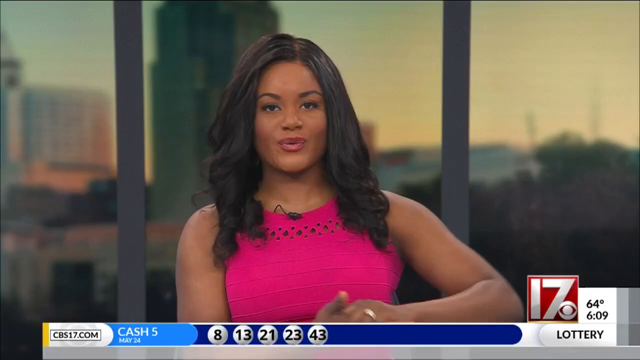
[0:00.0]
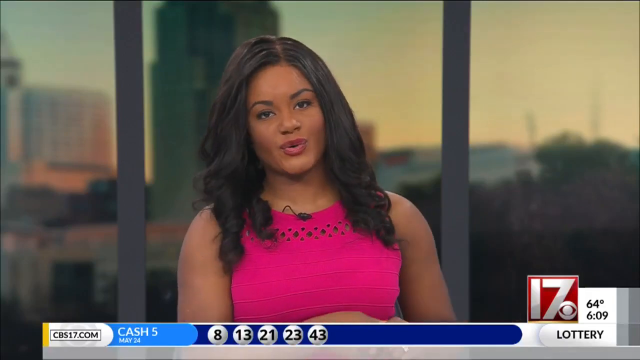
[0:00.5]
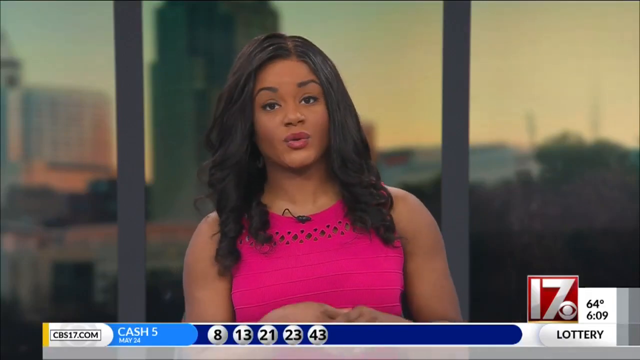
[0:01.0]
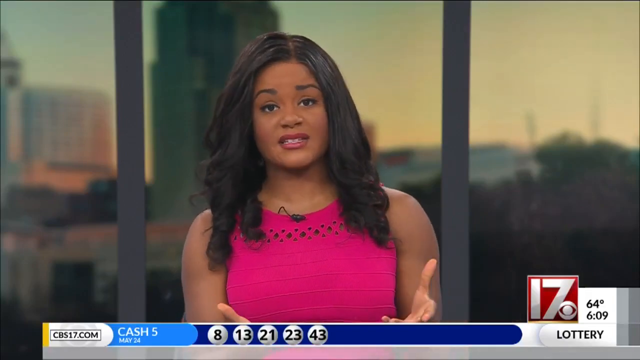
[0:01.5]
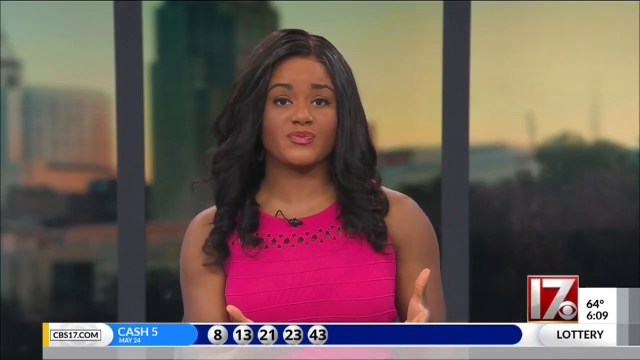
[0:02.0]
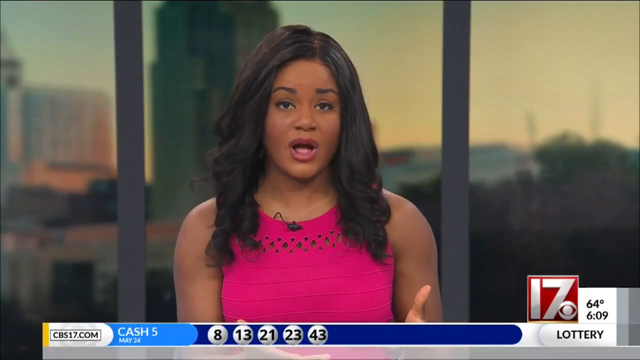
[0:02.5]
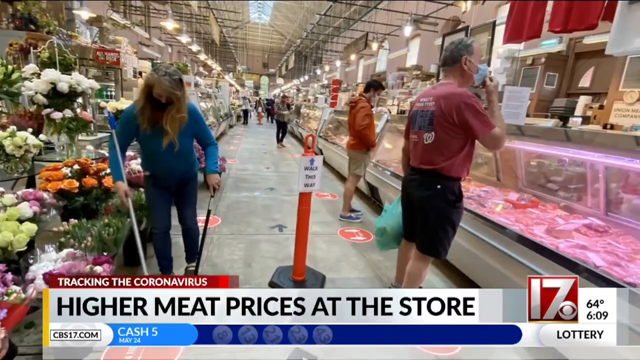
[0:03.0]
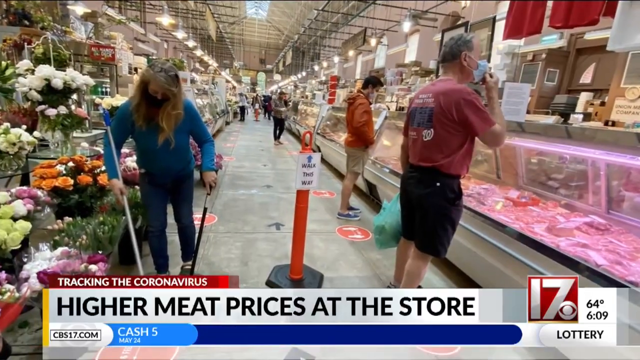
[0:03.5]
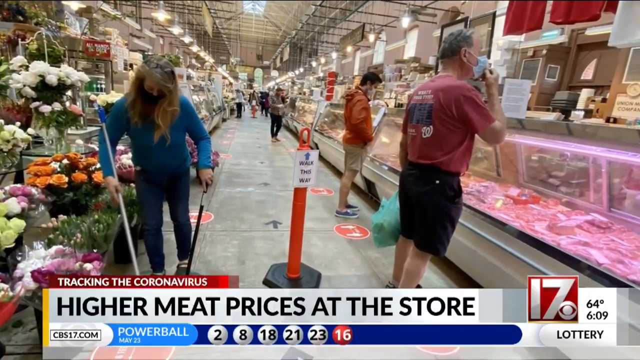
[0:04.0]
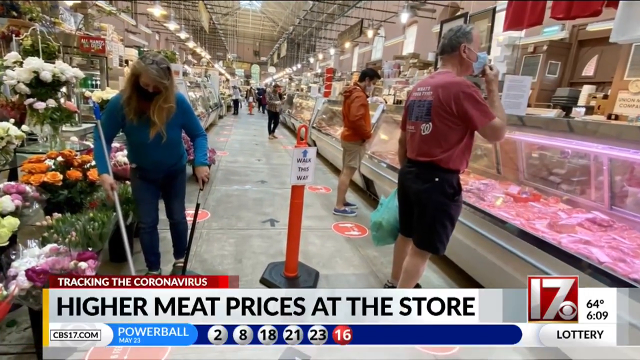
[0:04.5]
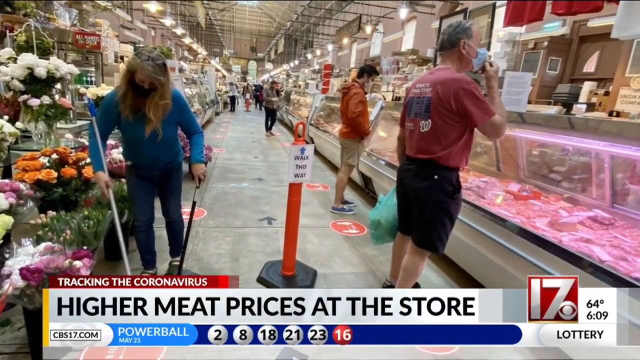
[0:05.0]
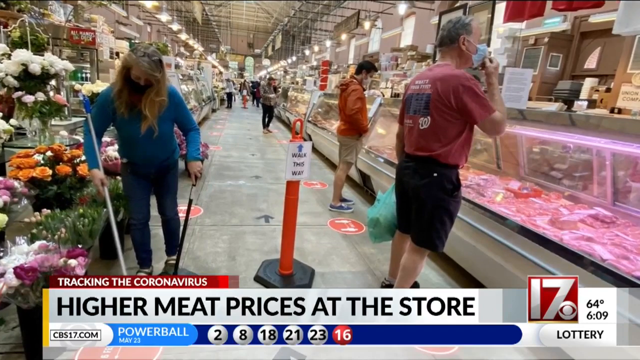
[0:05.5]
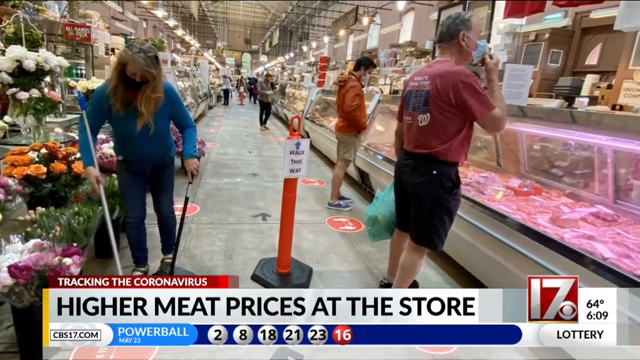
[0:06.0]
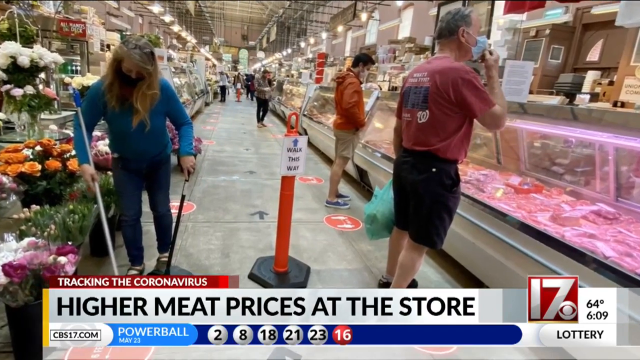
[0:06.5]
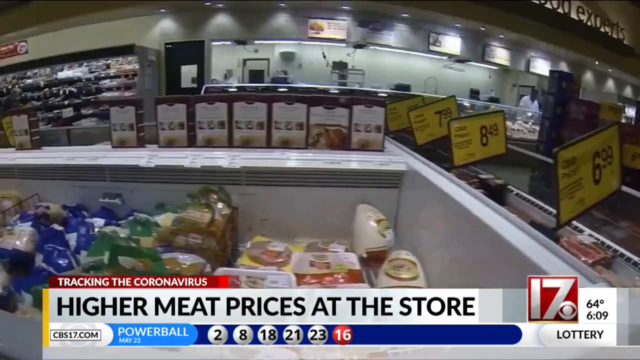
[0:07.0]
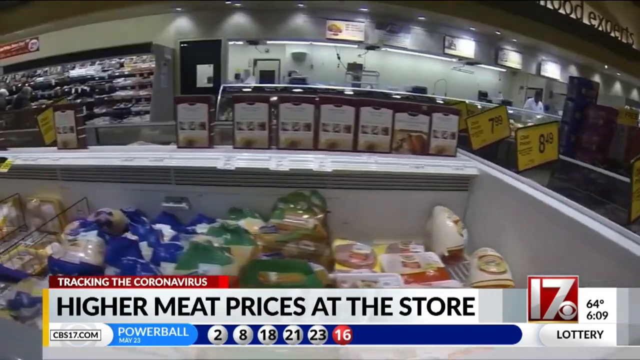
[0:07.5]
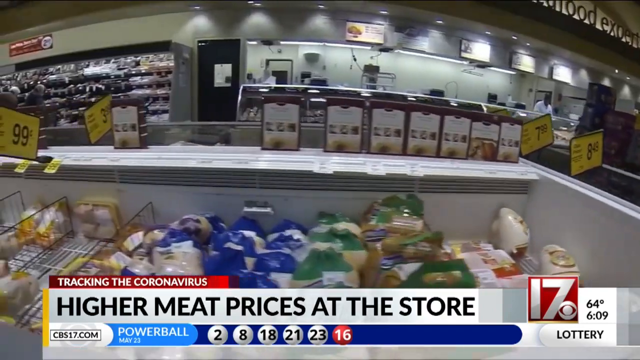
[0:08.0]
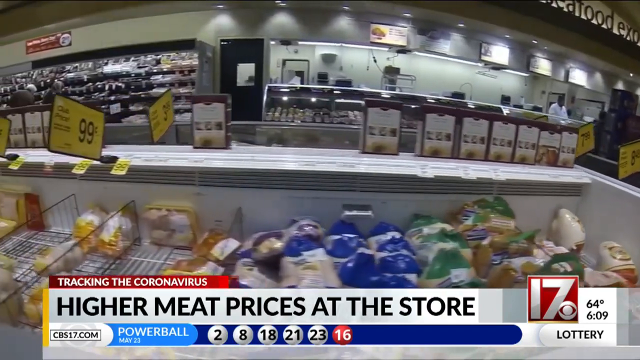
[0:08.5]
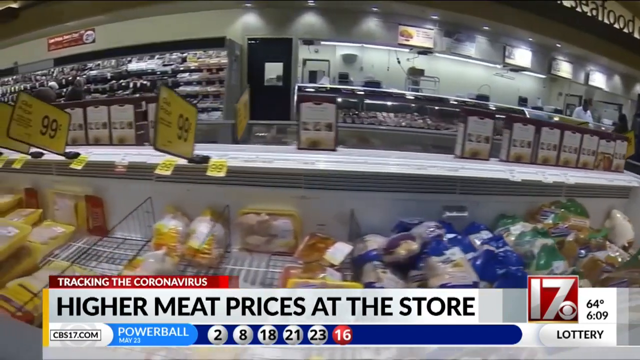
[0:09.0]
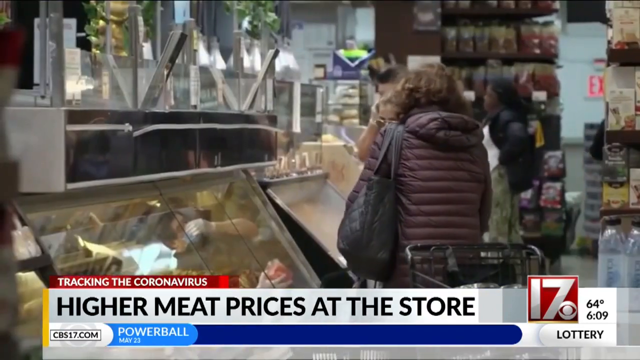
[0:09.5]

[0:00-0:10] A supermarket appears, with people standing, or rather doing their shopping. A message on the screen says "higher meat prices at the store." Everyone looks like they are just standing there being surprised, apparently because they can see the higher meat prices as they try to do their shopping. A black TV presenter appears; she wears a pink dress and has long, slightly wavy hair, and she is talking. The video then moves to the supermarket, where three people are standing: an old man who seems to be around 70 to 80 years old, another man standing behind him, and a lady who is also standing there, looking around. They don't seem to be doing much; they are just standing there.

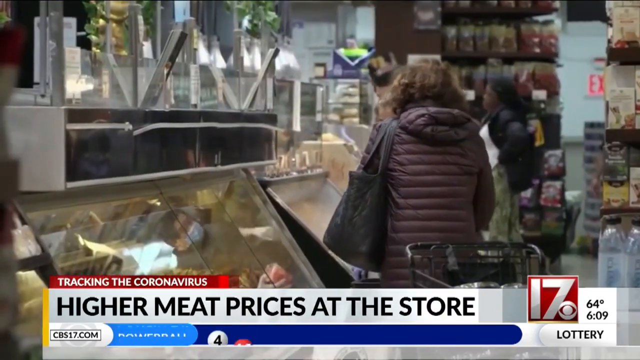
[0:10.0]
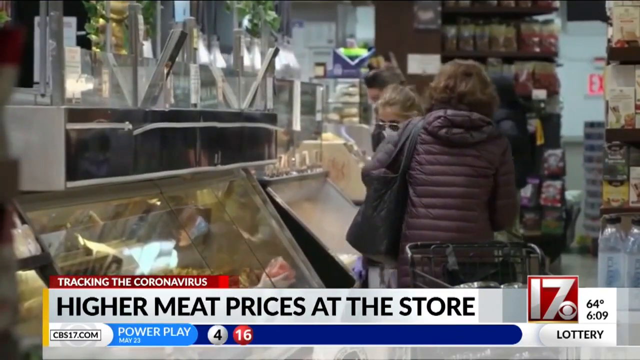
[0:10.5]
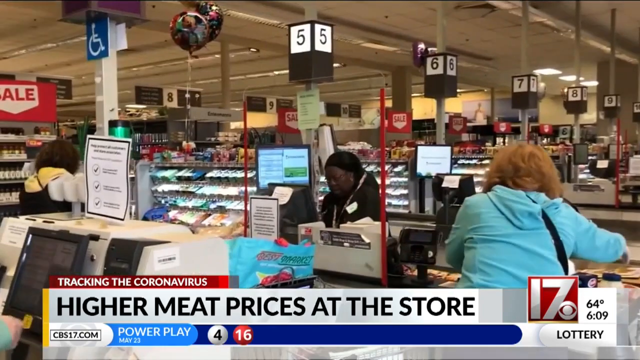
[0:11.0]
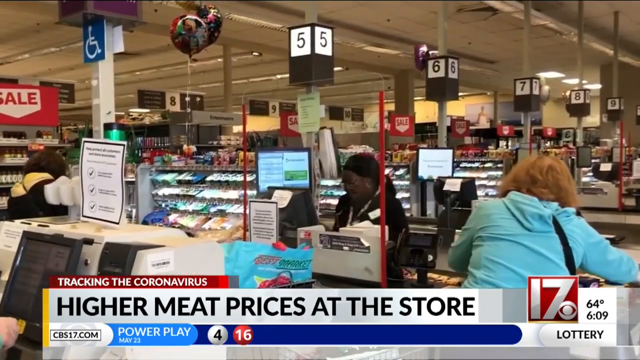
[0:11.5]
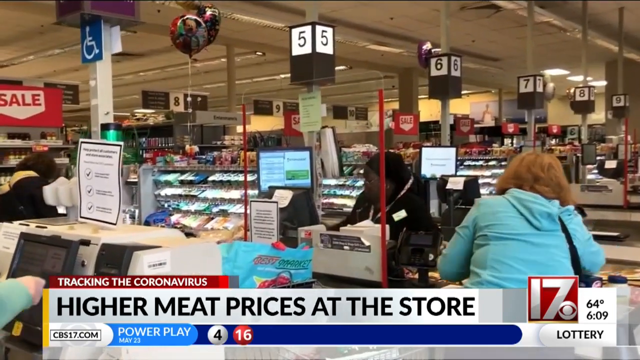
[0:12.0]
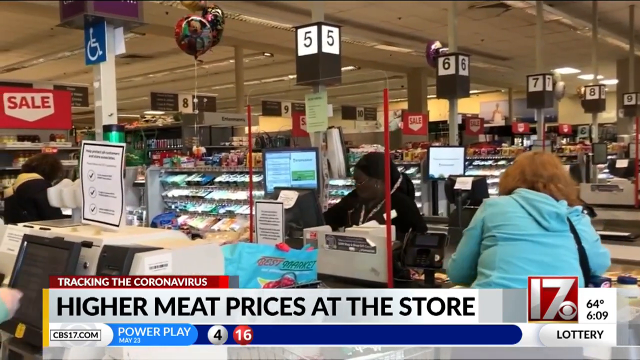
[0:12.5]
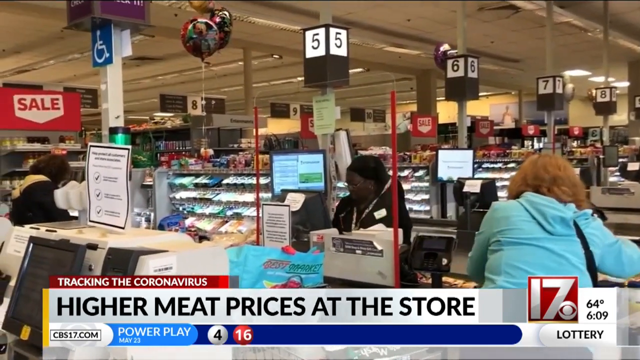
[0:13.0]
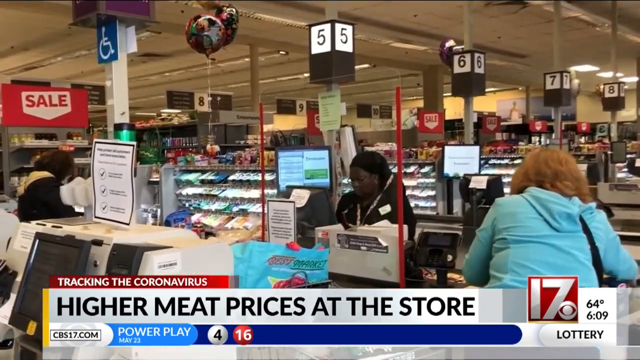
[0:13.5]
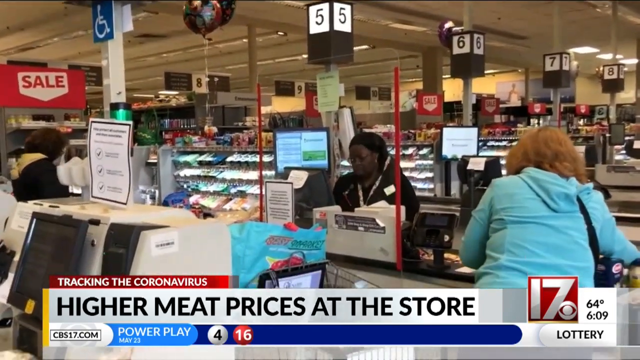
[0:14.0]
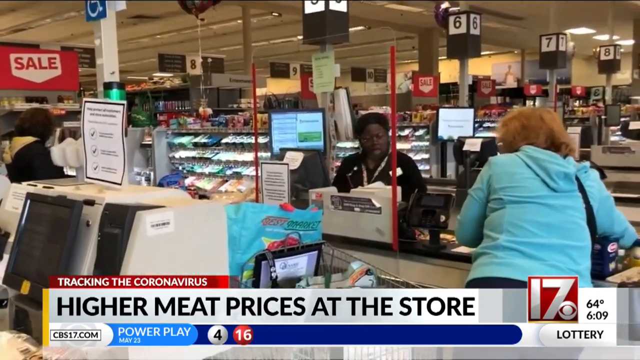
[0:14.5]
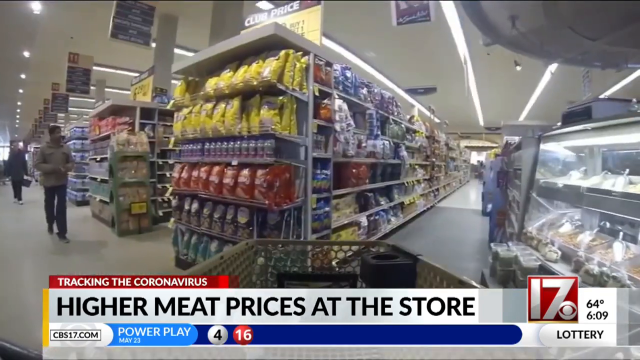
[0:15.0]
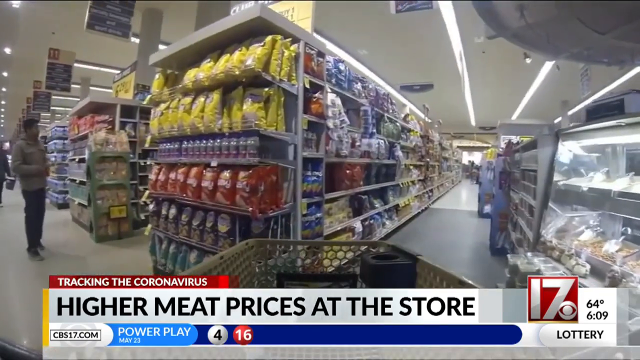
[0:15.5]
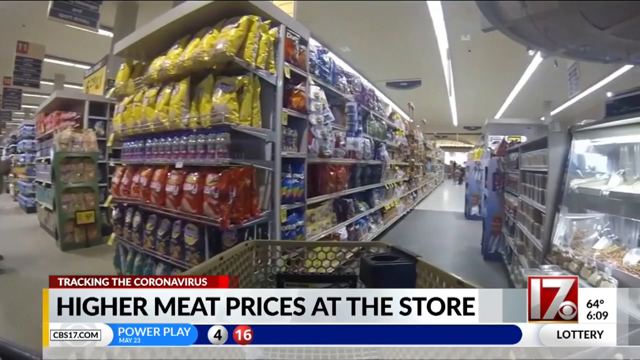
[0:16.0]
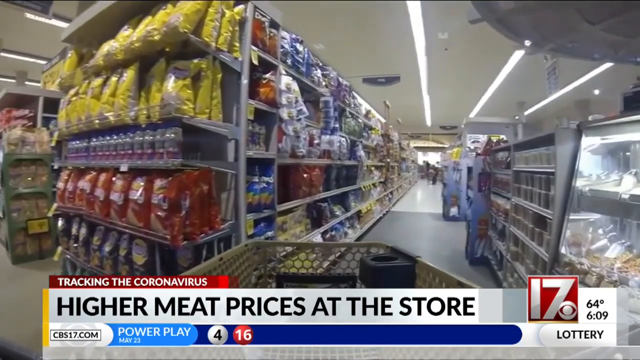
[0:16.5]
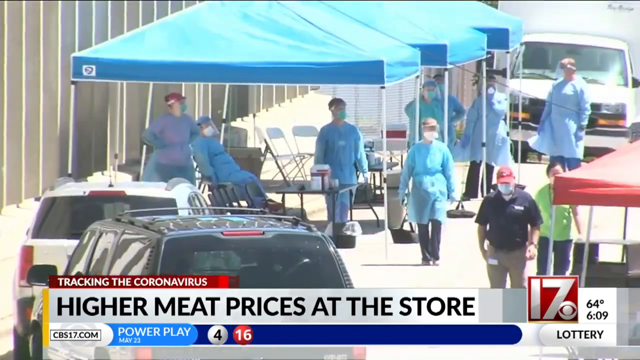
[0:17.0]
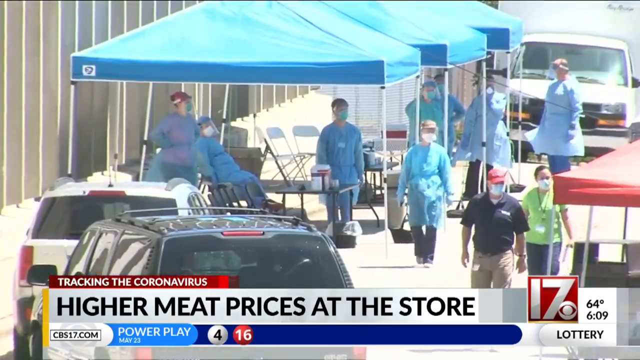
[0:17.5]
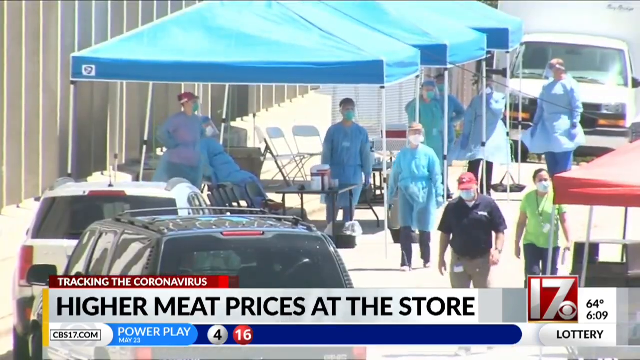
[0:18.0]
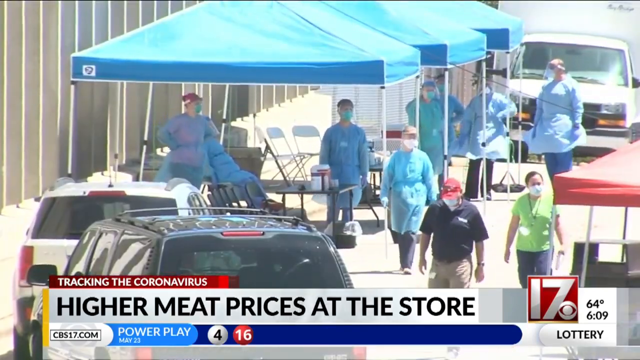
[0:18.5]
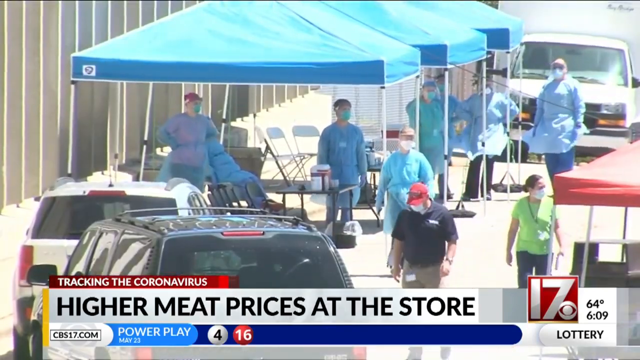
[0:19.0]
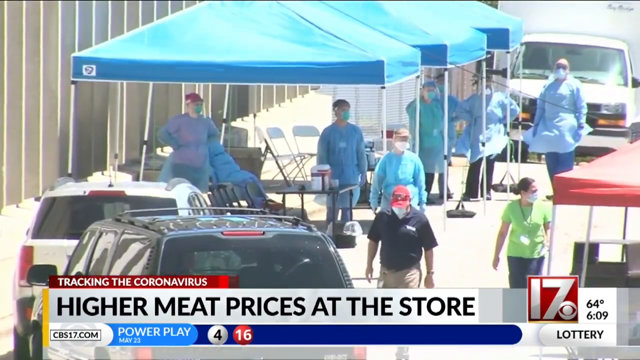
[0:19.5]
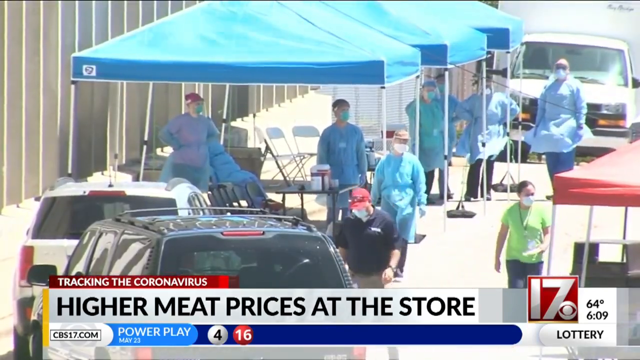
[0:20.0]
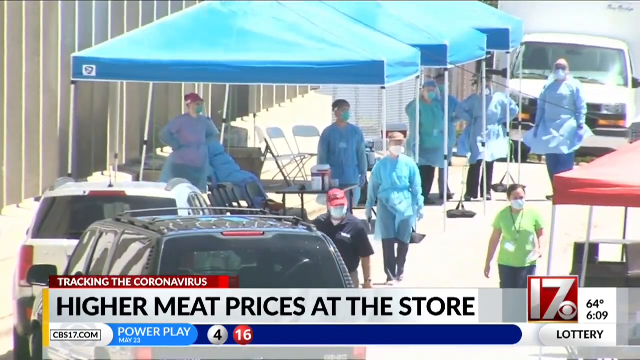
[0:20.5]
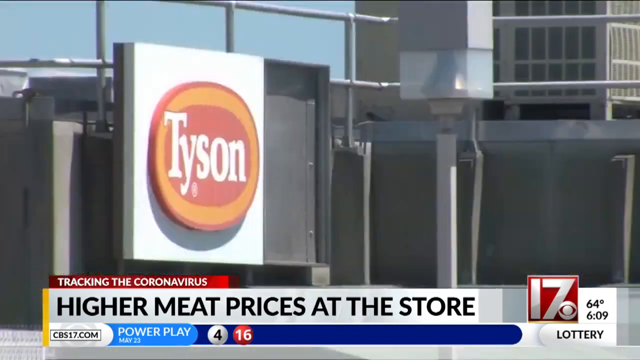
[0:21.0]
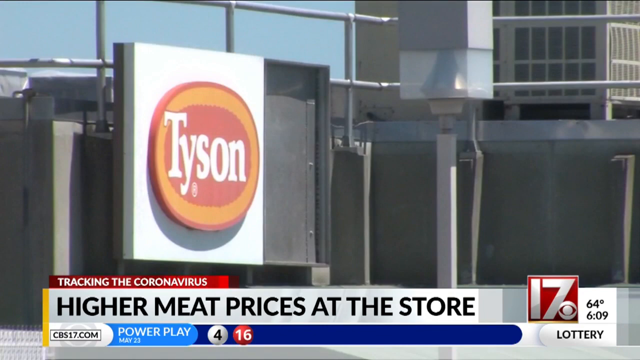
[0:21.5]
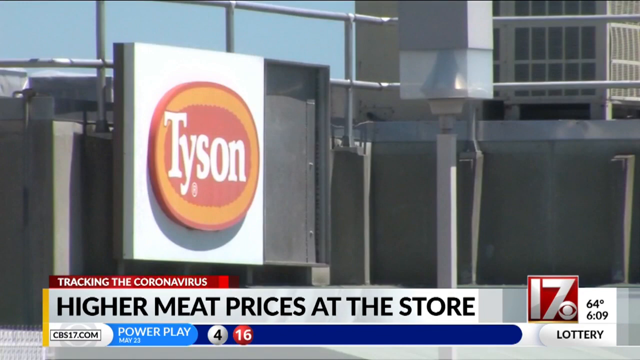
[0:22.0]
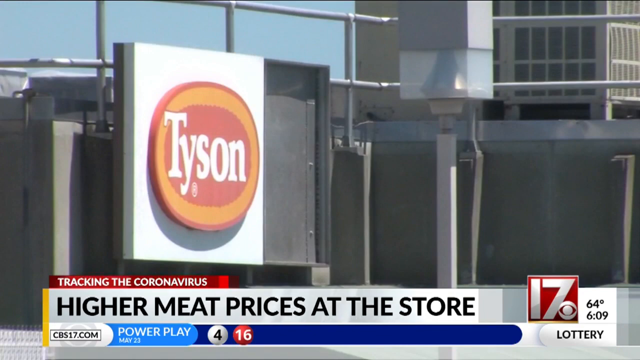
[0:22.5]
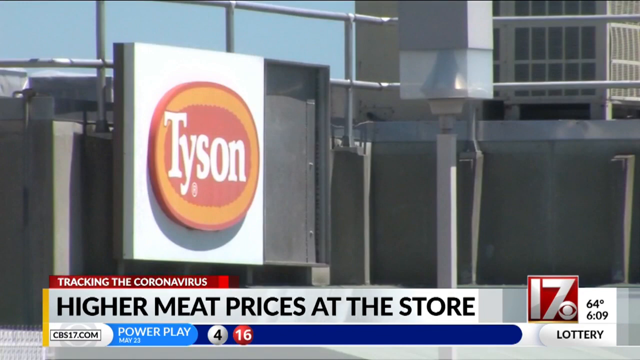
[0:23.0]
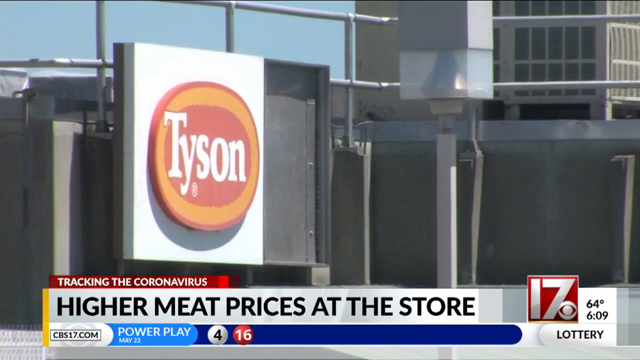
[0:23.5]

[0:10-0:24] People are shopping in the supermarket: some are making payments, while others are still going around with their trolleys picking up groceries. A cashier helps a client pay for her groceries. The video then shows an unclear place where some people are wearing blue plastic overalls; it could possibly be where the meat comes from, where it is slaughtered and repacked.